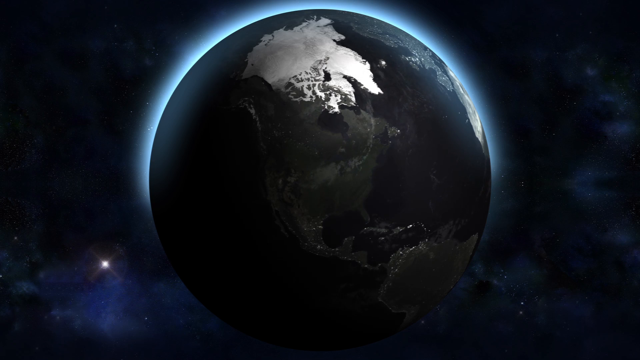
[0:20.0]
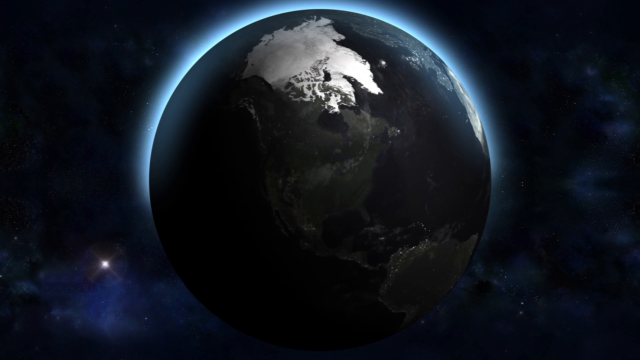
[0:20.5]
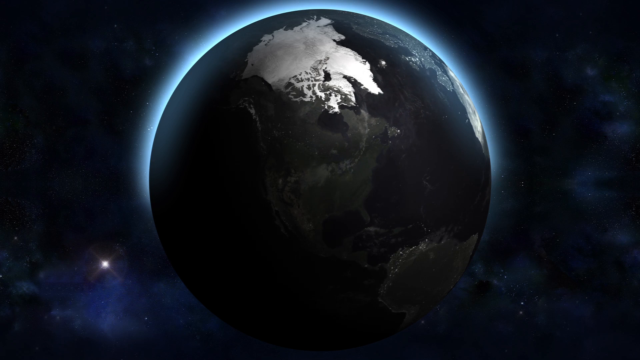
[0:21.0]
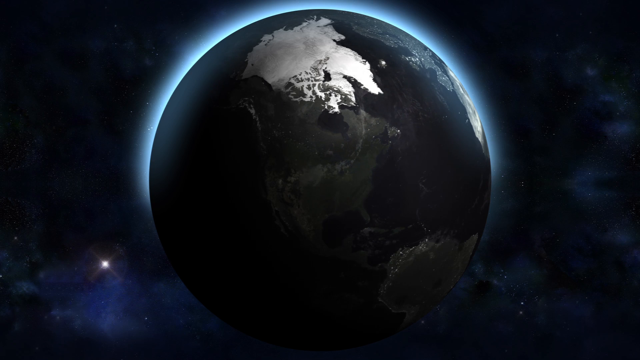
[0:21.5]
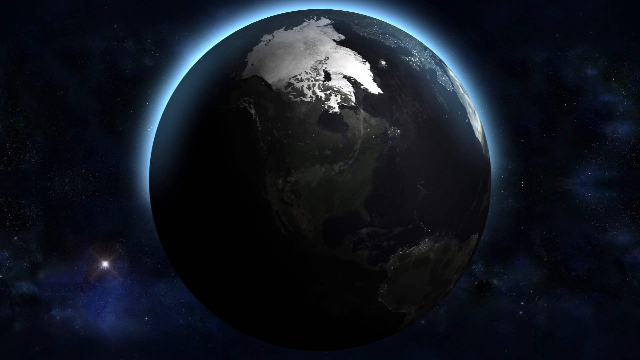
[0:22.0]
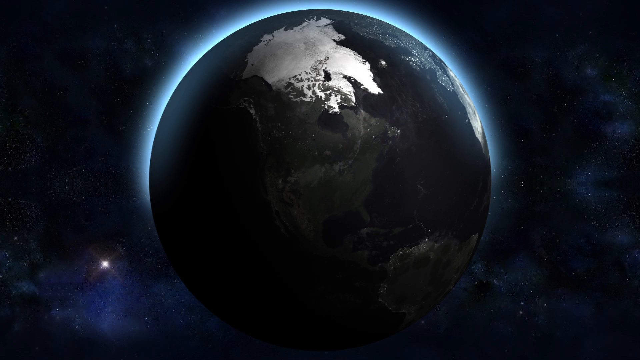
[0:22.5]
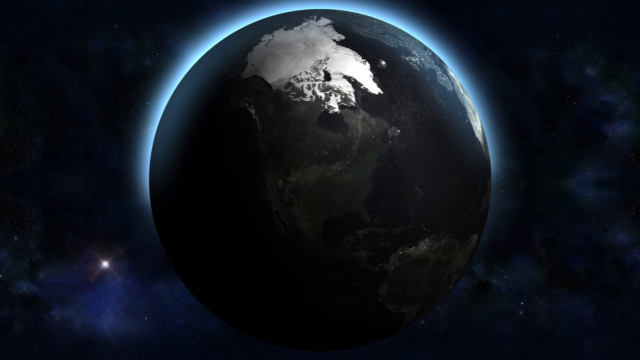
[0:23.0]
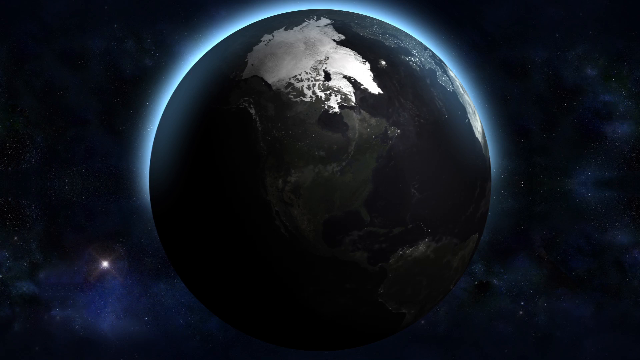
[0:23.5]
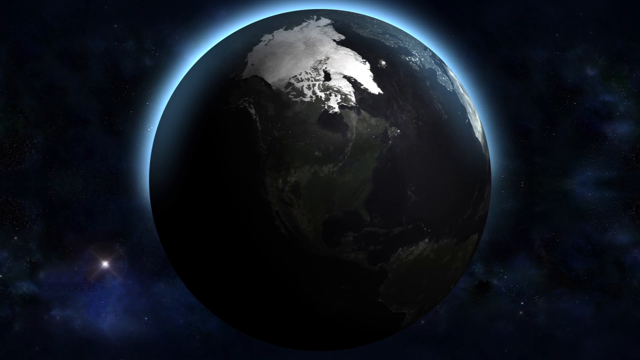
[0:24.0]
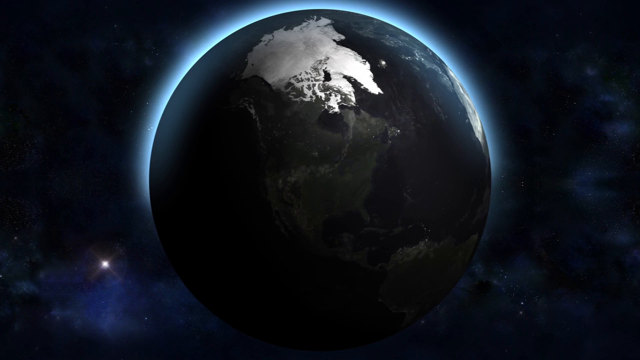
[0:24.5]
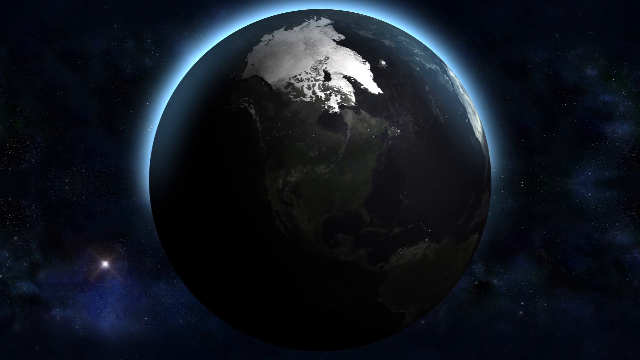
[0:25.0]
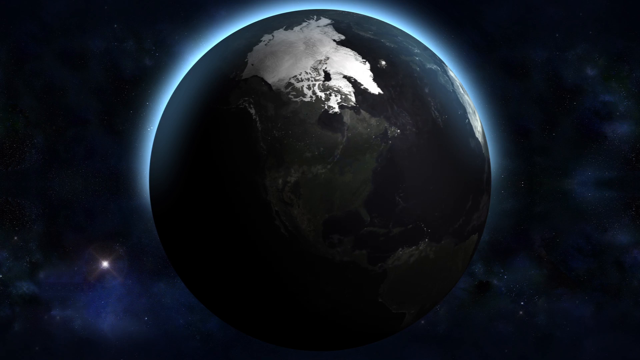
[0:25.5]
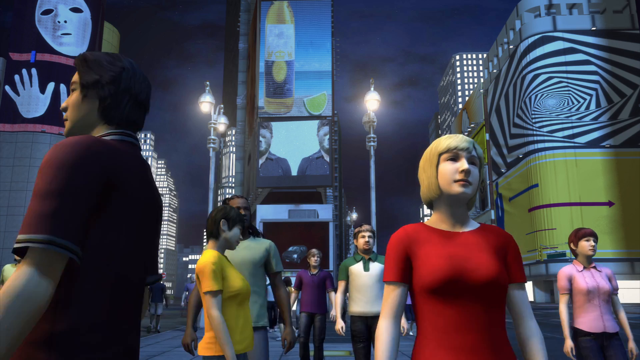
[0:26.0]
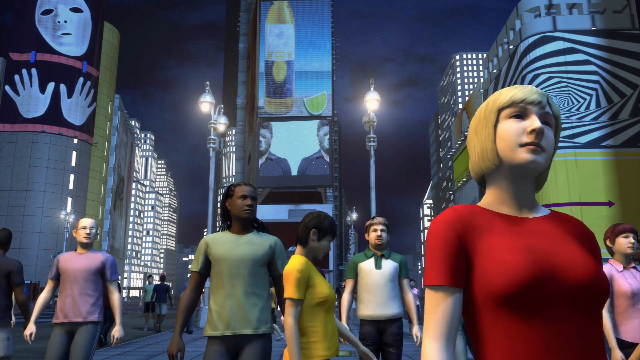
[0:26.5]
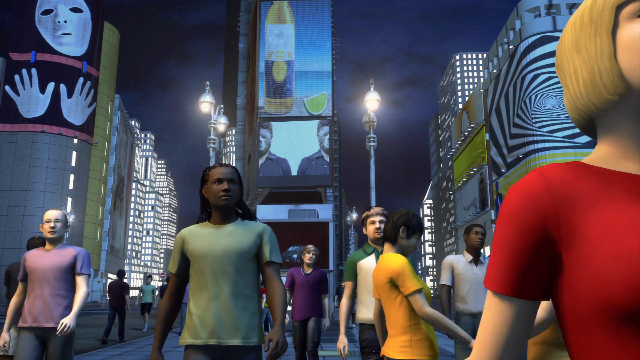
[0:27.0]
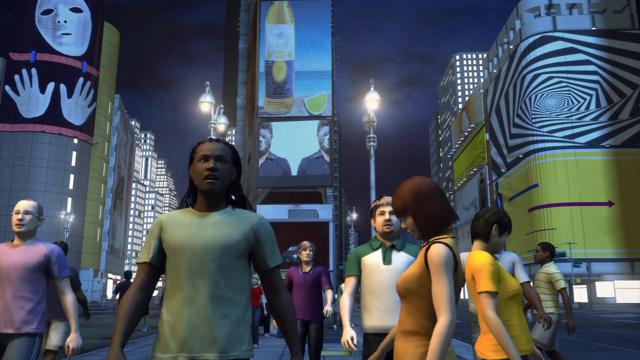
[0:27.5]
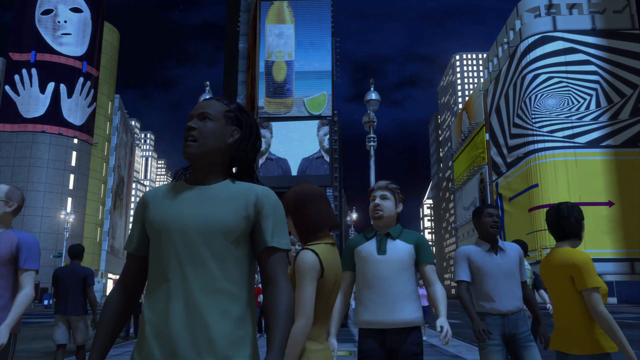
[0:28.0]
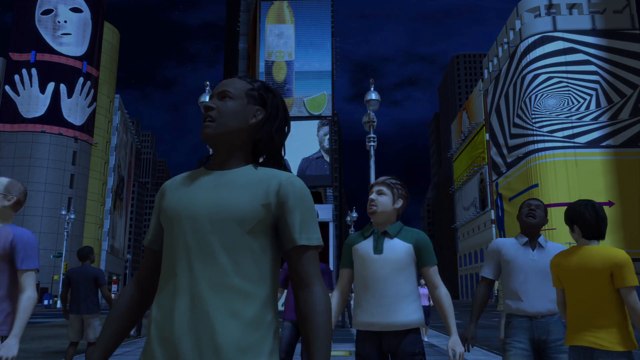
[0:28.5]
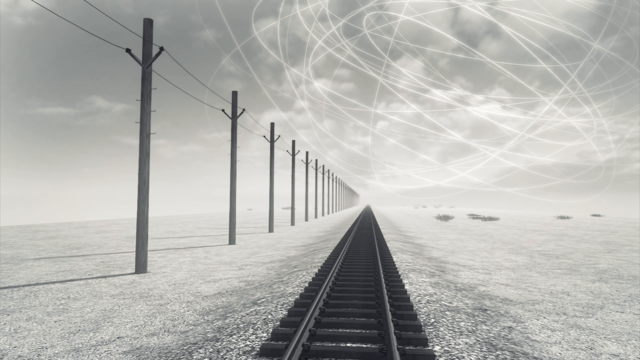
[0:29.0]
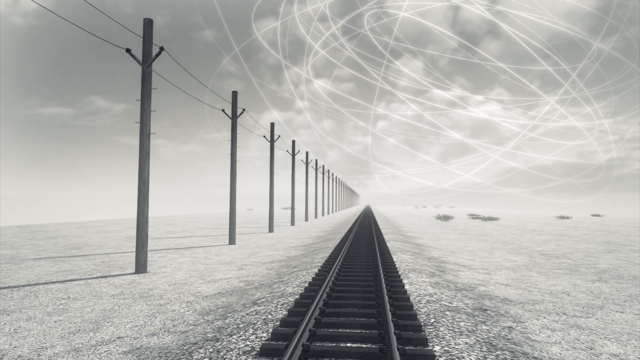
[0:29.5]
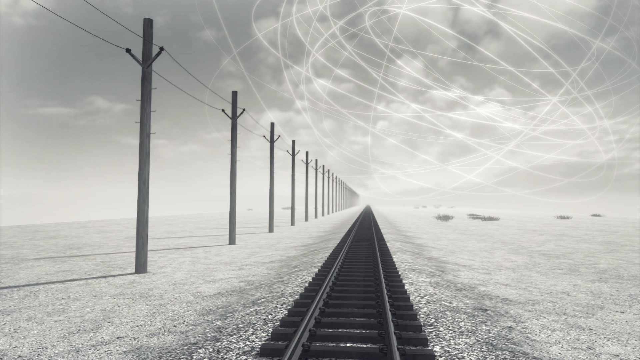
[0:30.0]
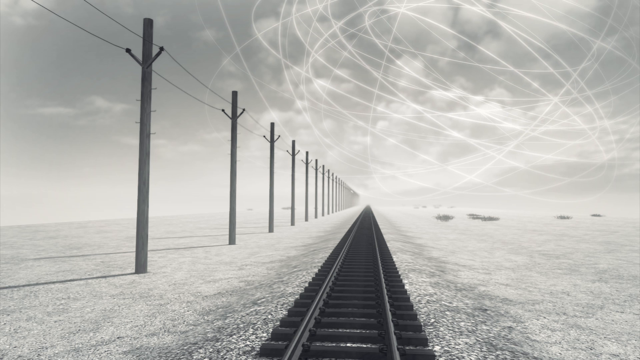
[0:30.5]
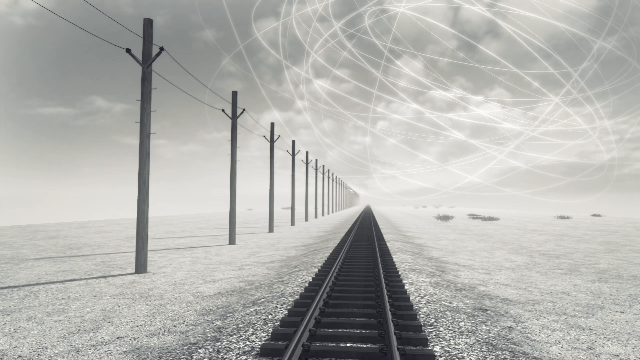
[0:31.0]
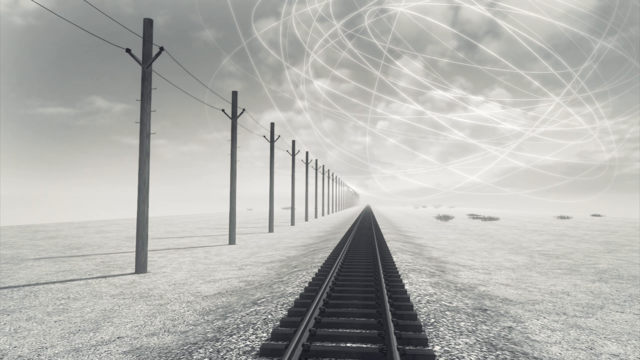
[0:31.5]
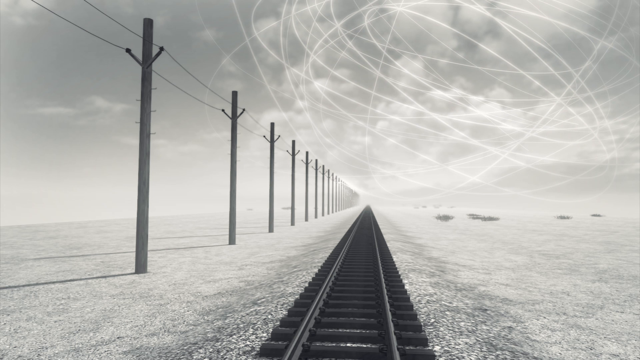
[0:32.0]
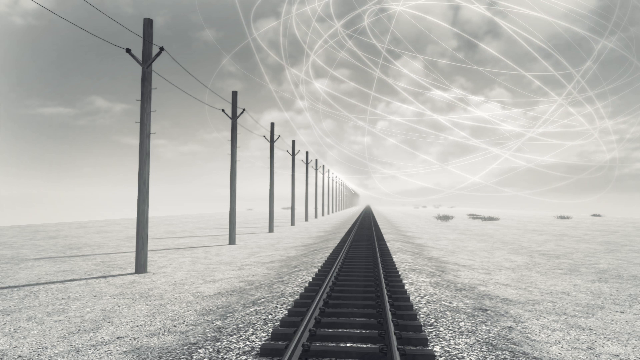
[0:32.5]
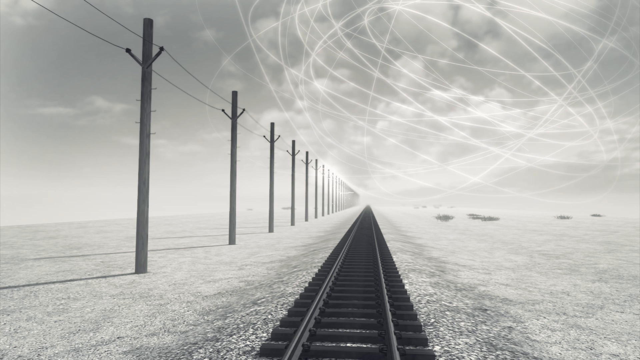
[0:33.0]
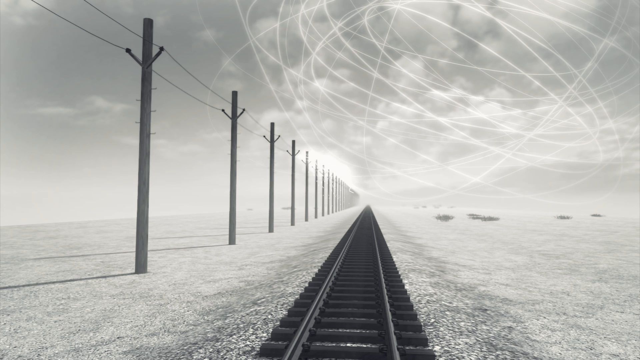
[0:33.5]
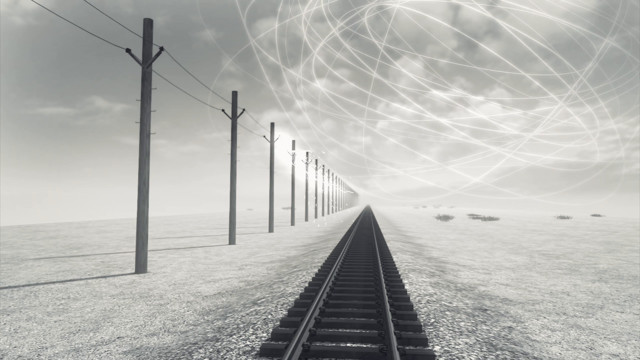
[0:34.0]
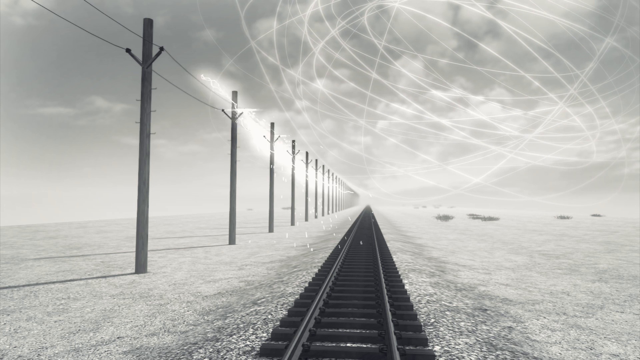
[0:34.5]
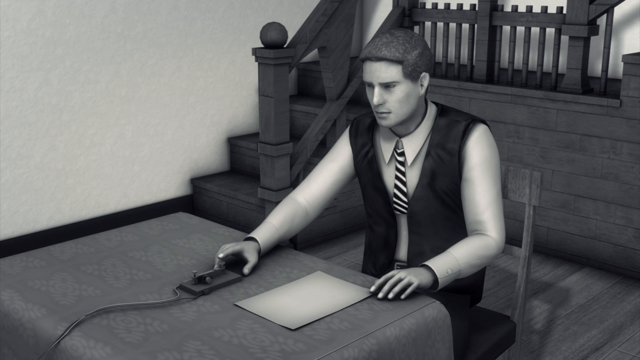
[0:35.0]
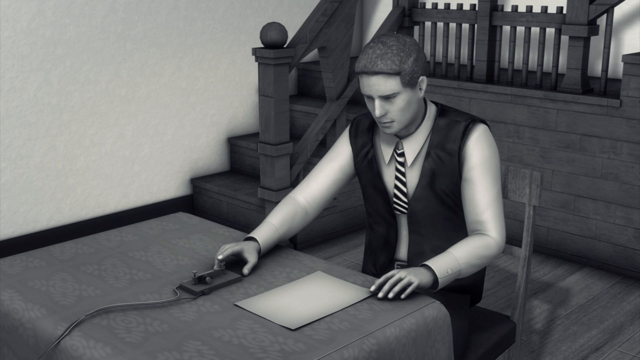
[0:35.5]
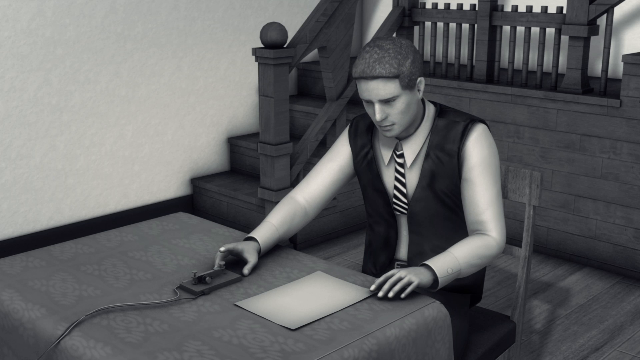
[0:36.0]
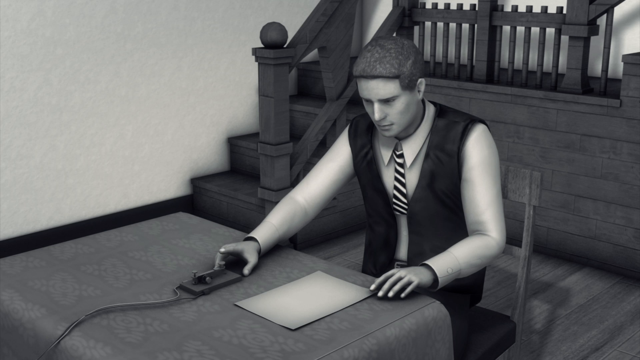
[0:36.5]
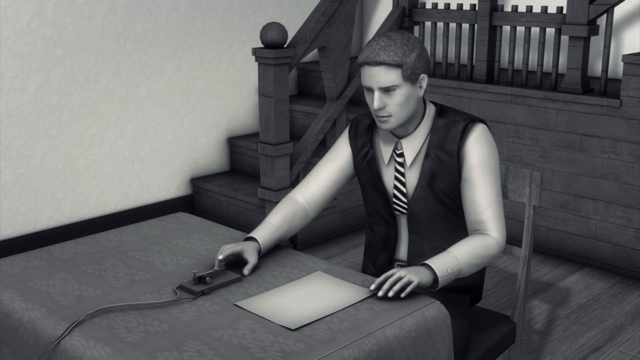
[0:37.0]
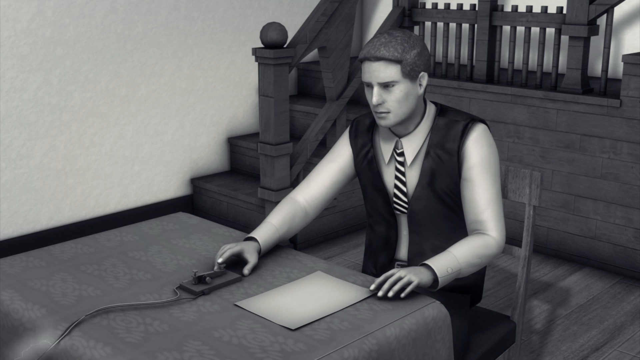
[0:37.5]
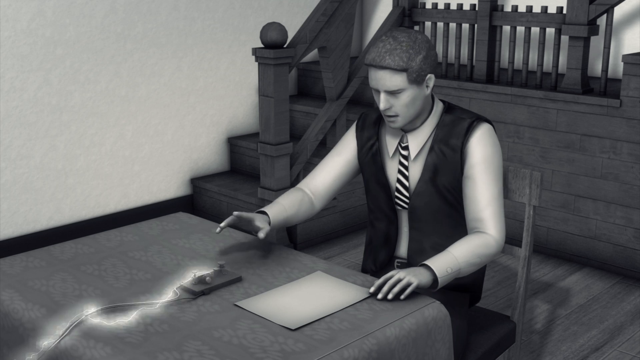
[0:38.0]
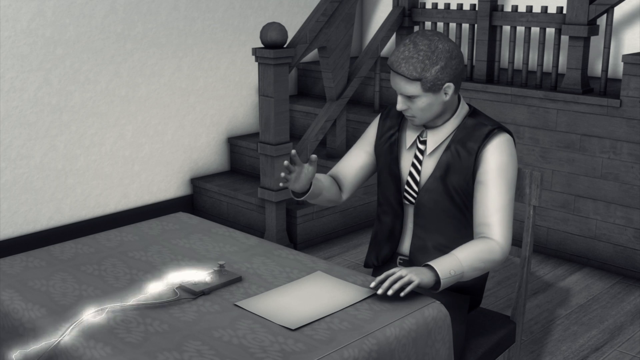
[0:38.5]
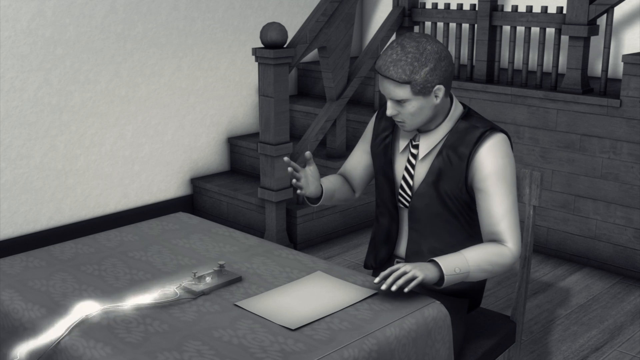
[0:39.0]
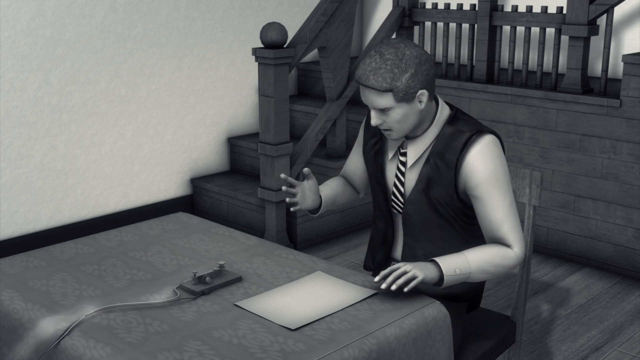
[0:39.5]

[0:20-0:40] A globe of the Earth shows some of the continents, with a shiny blue line toward the top of it. Then there are areas where people are walking, in a place kind of like New York City, during a power outage. Telephone poles appear, and suddenly the lines stop working, with something like electricity running through them. Different areas on the globe suddenly become dark. Everything is drawn. Along the telephone lines, a whole line of electricity, almost like lightning, shoots down, connecting all the lines. A person tries to send out something like a telegram, and that stops working as well.